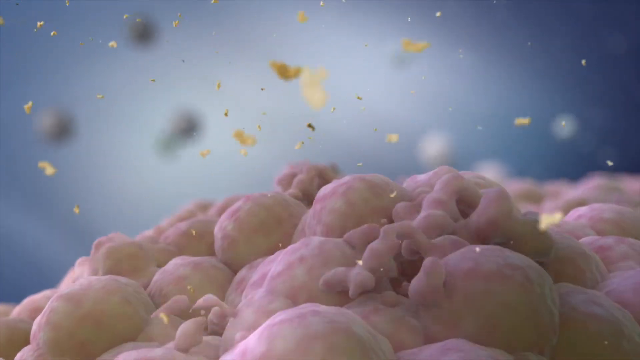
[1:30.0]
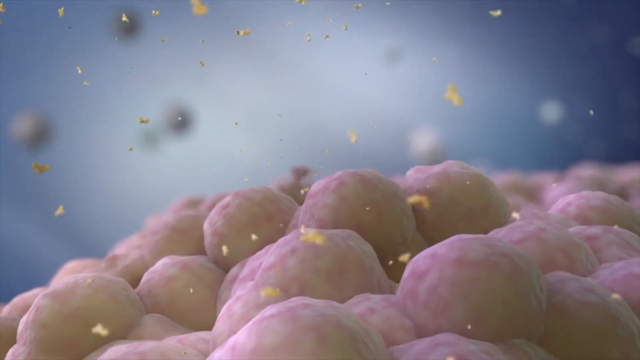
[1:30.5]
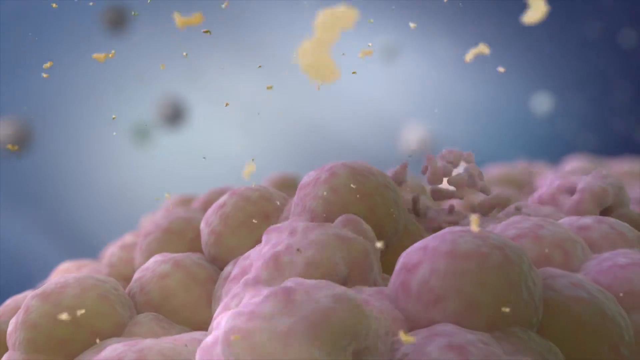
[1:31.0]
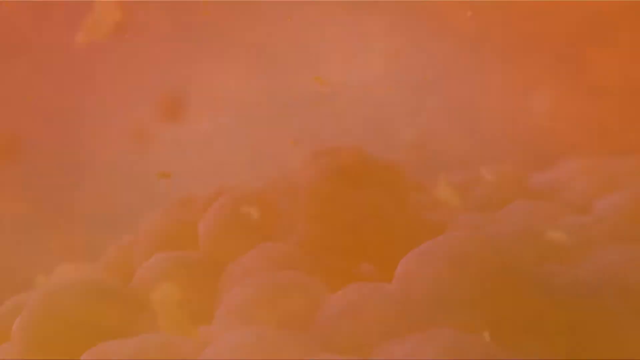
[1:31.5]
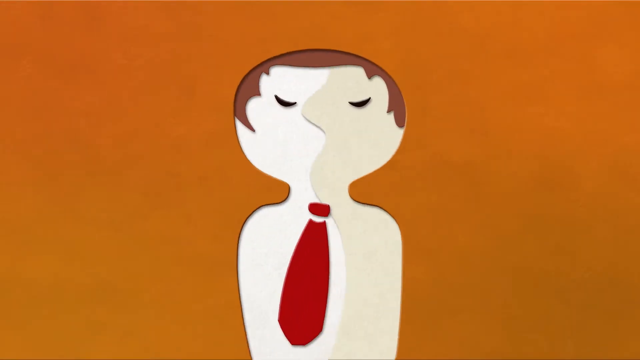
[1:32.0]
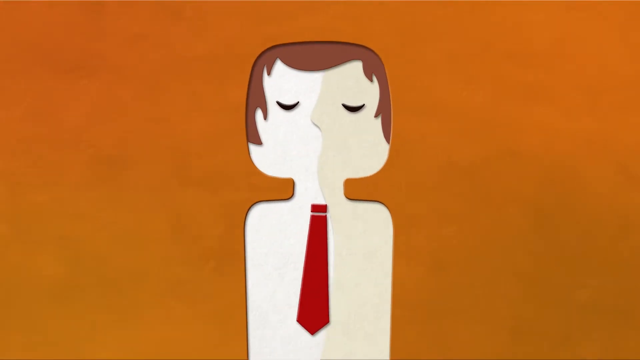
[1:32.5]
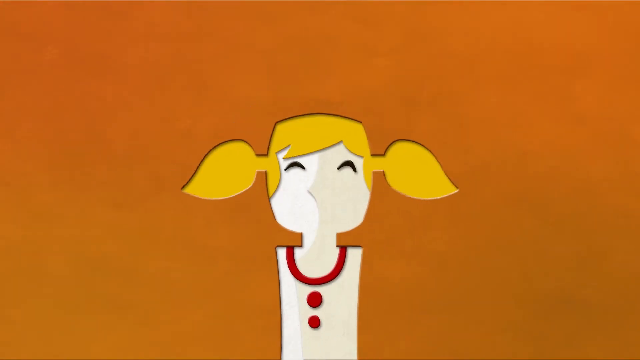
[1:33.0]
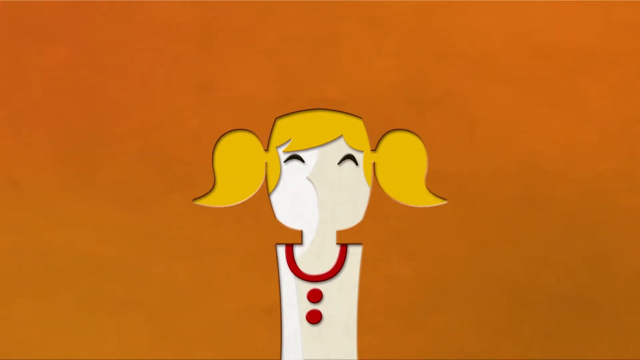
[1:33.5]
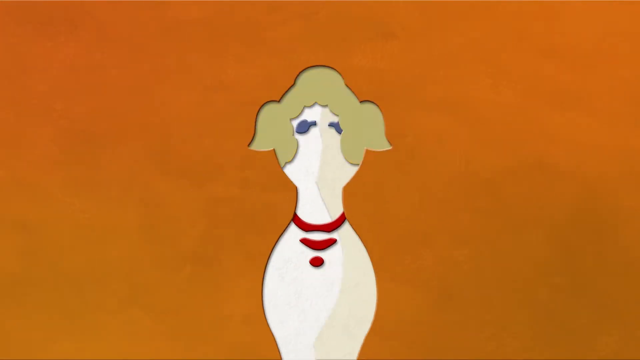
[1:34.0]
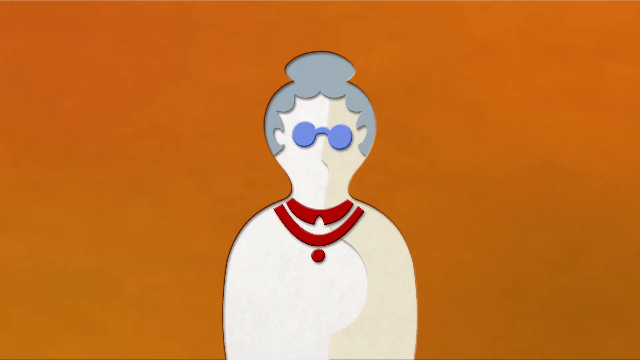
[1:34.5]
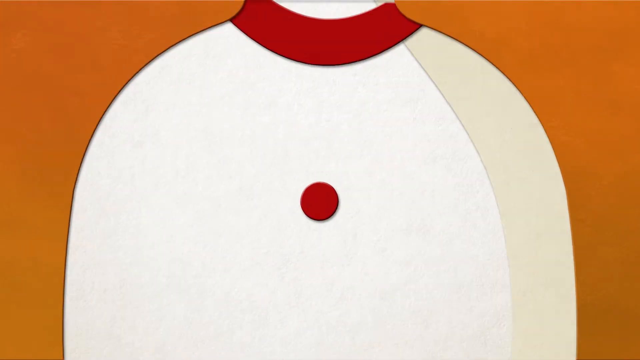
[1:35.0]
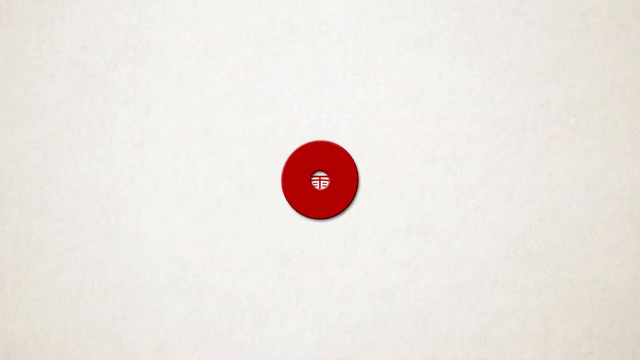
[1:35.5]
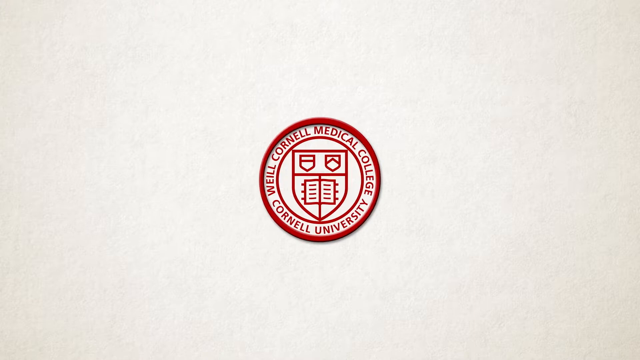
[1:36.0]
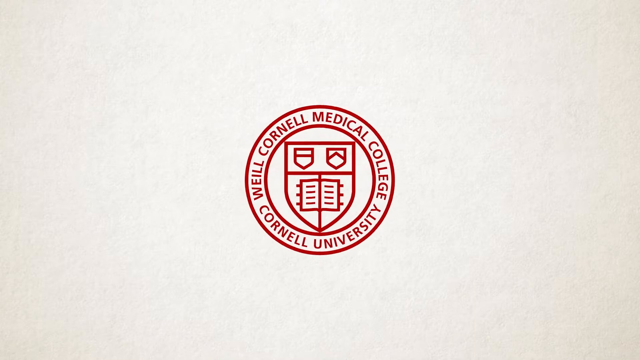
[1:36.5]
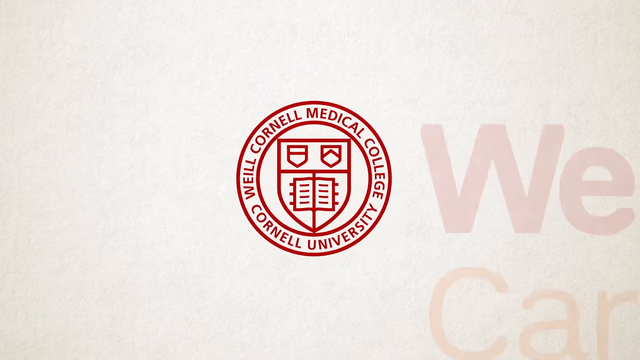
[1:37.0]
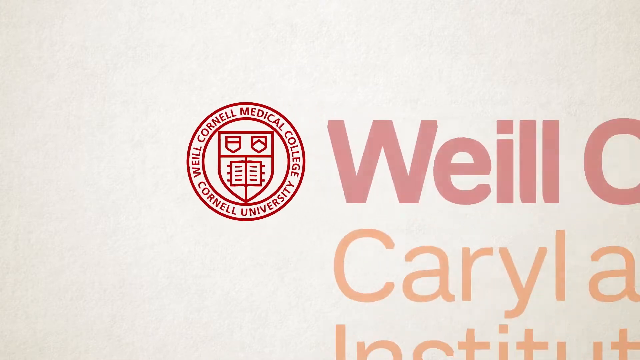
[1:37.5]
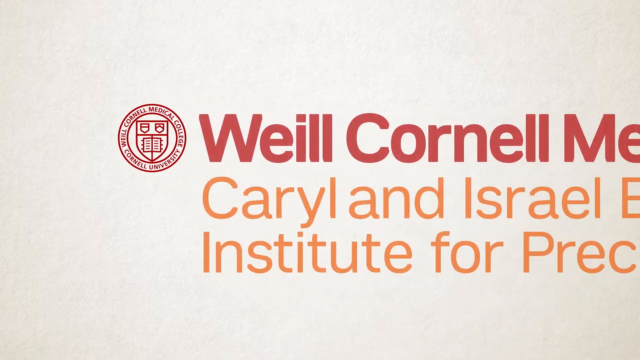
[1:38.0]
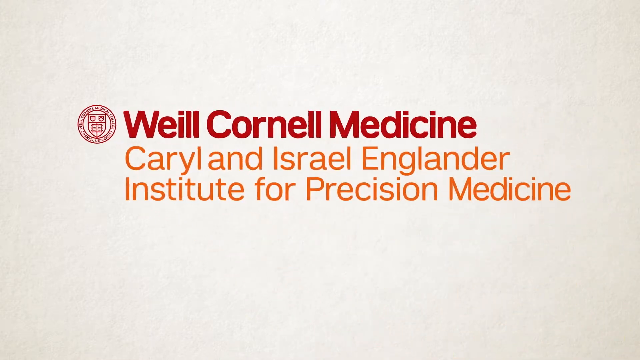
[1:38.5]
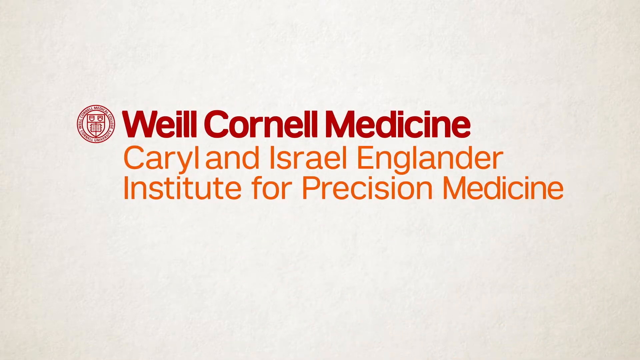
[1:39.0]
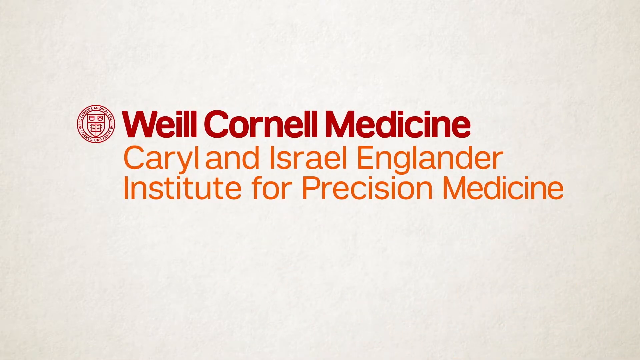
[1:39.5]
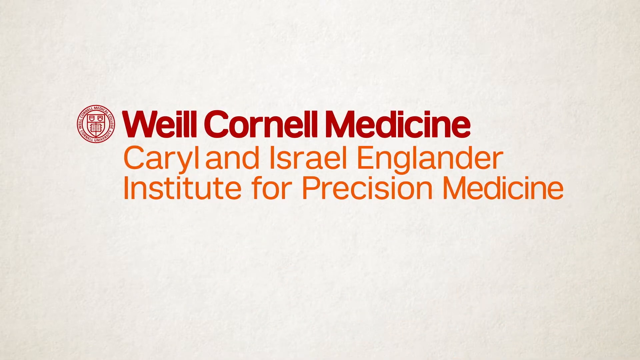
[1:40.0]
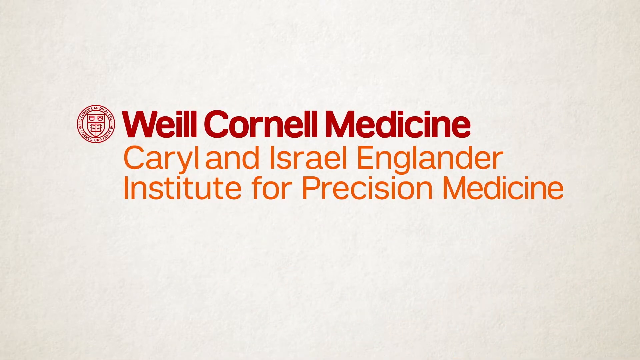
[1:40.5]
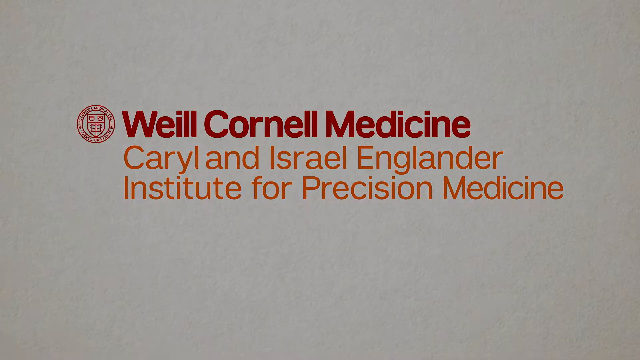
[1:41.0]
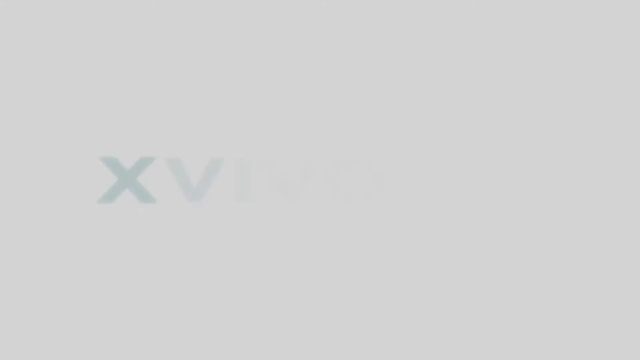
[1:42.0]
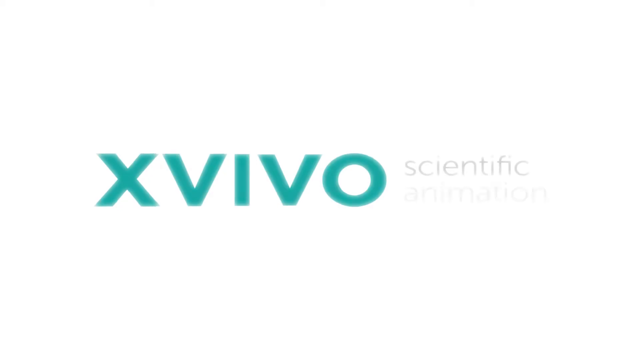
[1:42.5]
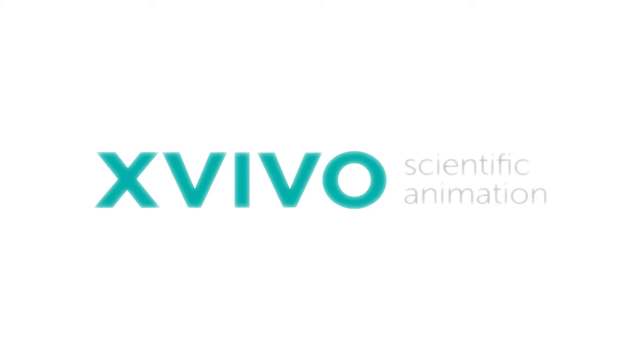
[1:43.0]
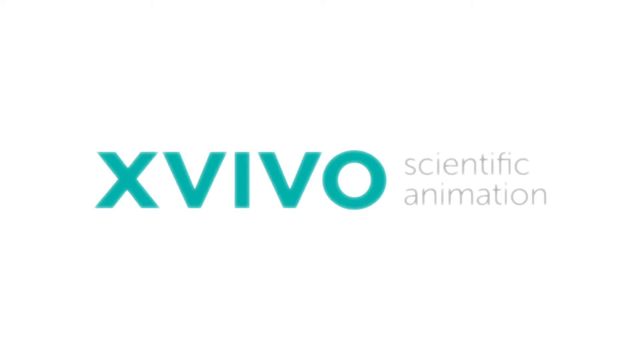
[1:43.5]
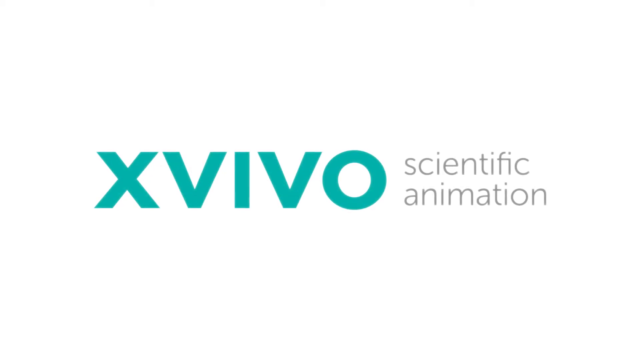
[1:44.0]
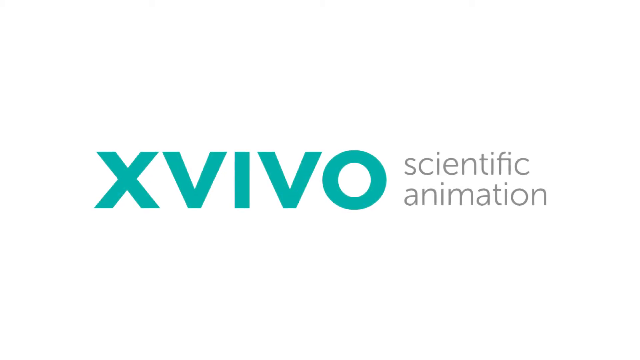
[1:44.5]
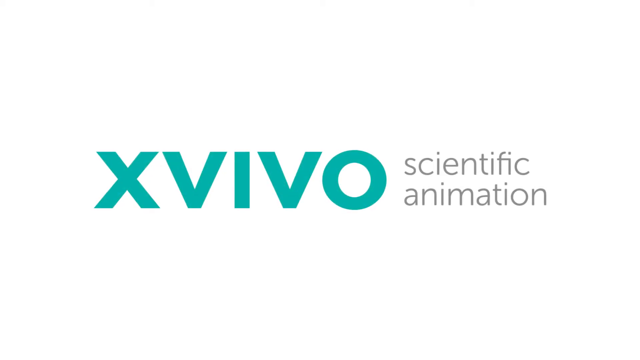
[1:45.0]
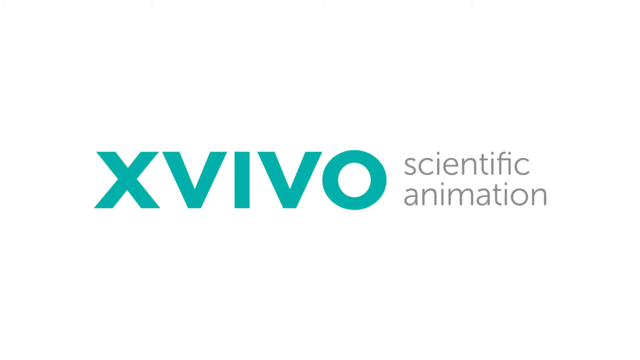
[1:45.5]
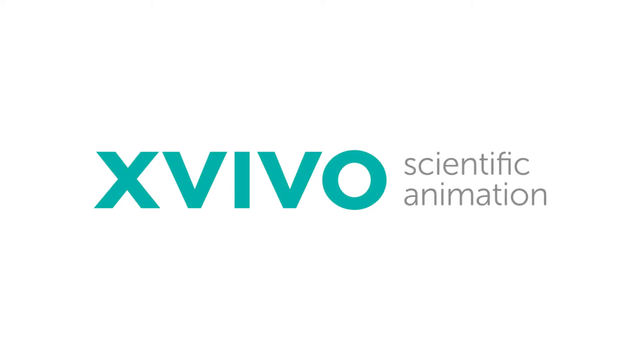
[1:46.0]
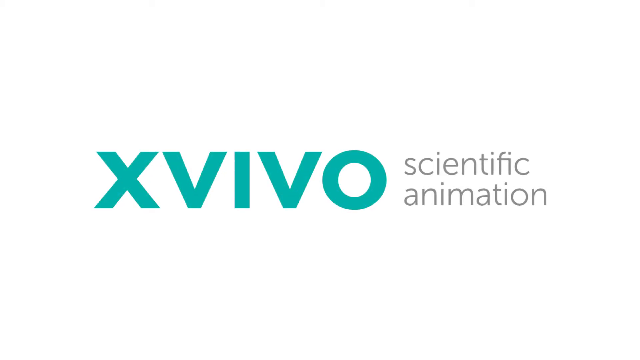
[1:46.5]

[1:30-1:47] An up-close view shows bacteria with what looks like pieces of confetti flying down onto them, causing the bacteria to bubble up. The scene changes to an all-orange backdrop, and a 2D man with a tie appears. He turns into a small 2D female child with pigtails who is smiling, and she then turns into a 2D grandmother with spectacles on her face. The camera zooms into a button on the grandma's shirt, and the button turns into a brand insignia reading "Cornell Medical College", with "Cornell University" at the bottom and a shield in the center containing an open book and some other symbols. The view zooms out and text appears reading "Weill Cornell Medicine" and "Caryl and Israel Englander Institute for Precision Medicine", staying on screen for a while. The screen then goes dark, and more text appears in green on a now white background: the letters "XVIVO" with "Scientific Animation" next to them, and the video ends.